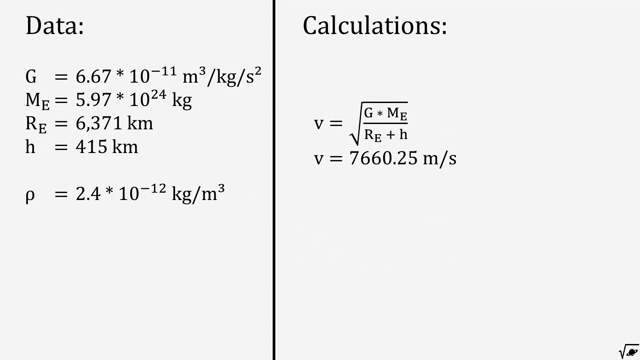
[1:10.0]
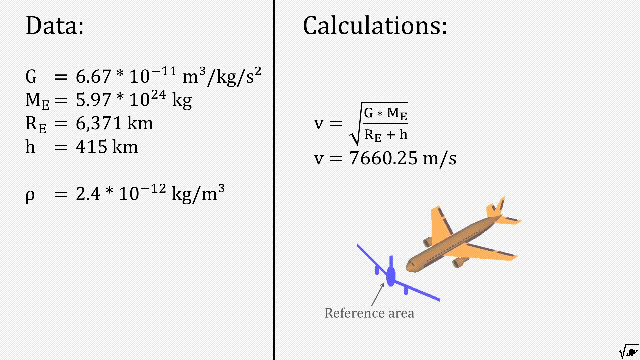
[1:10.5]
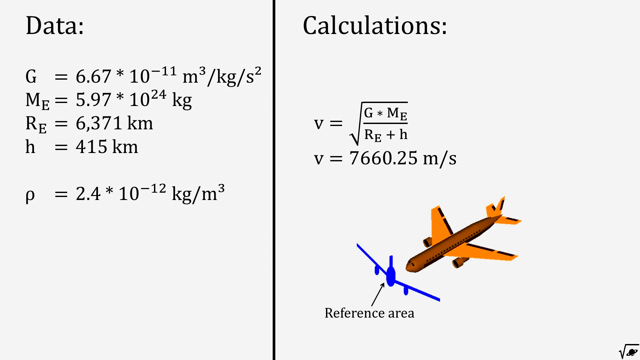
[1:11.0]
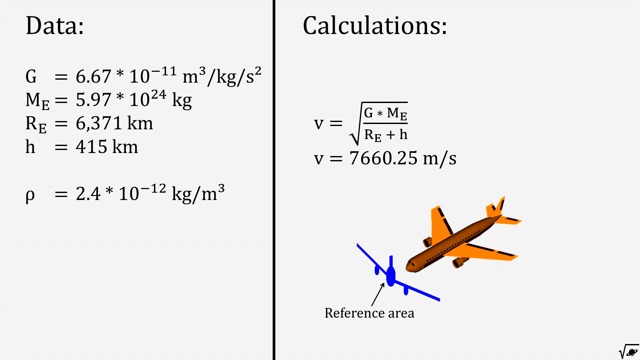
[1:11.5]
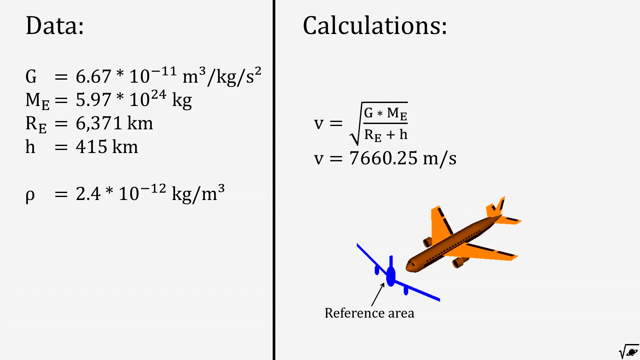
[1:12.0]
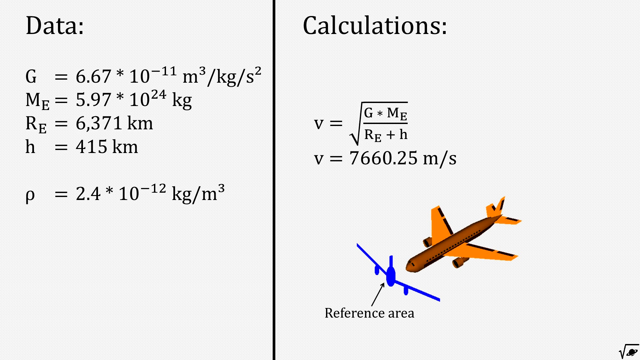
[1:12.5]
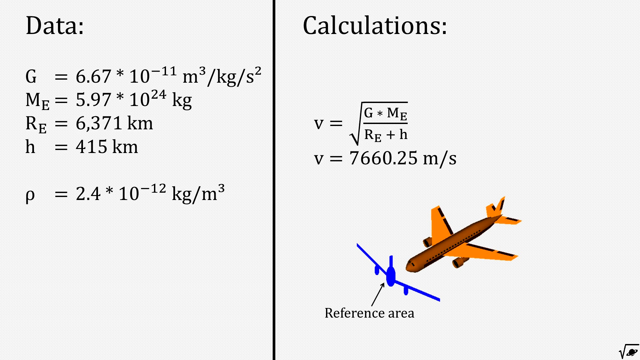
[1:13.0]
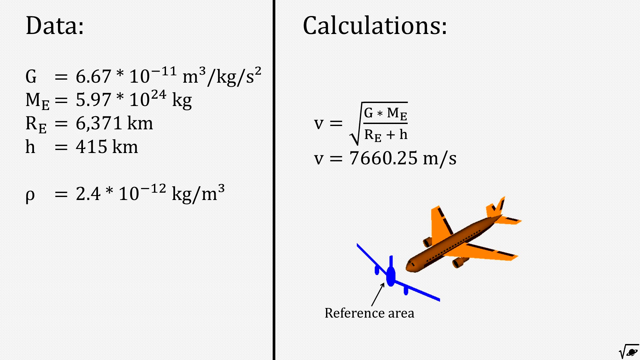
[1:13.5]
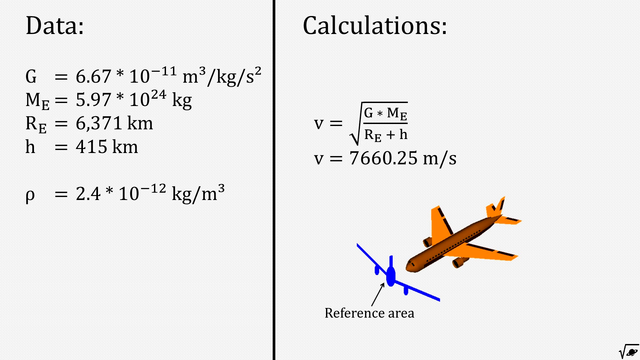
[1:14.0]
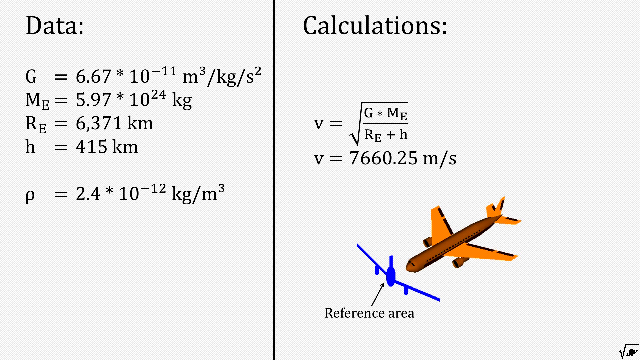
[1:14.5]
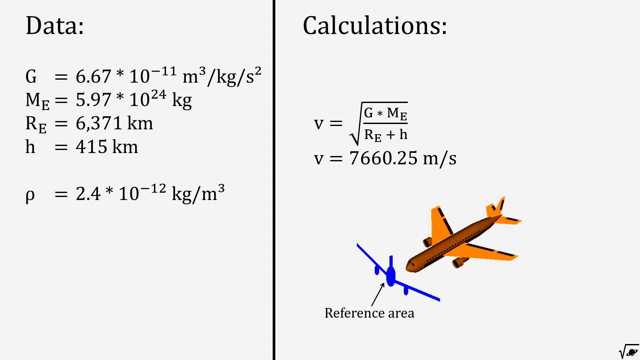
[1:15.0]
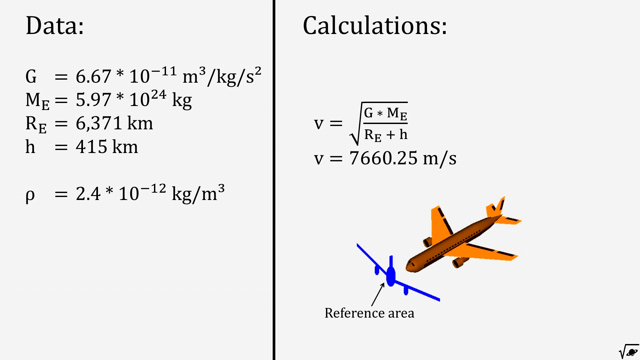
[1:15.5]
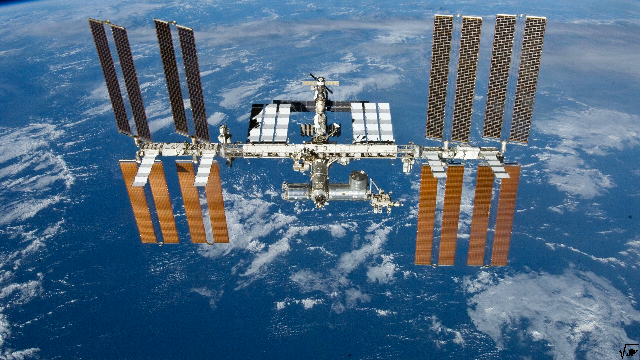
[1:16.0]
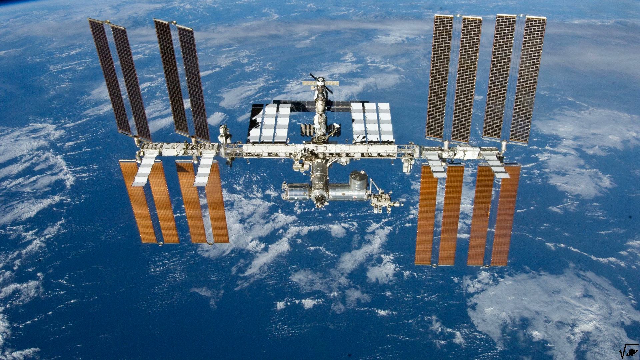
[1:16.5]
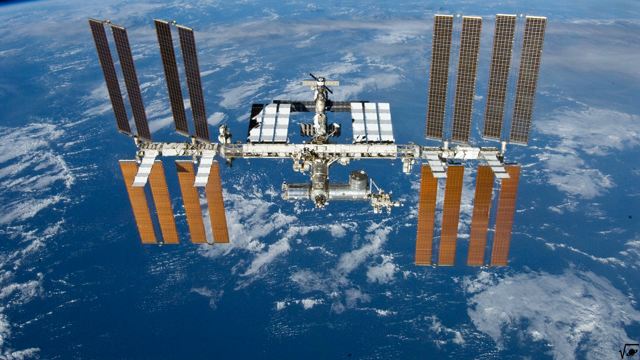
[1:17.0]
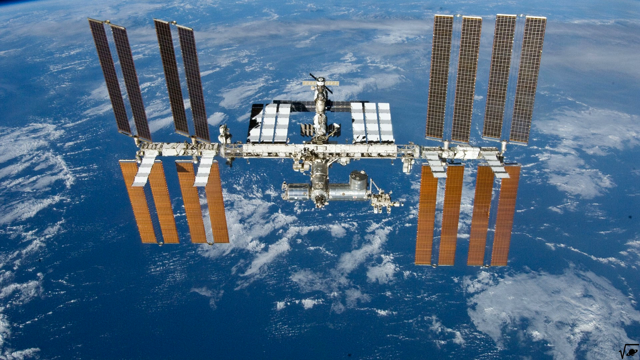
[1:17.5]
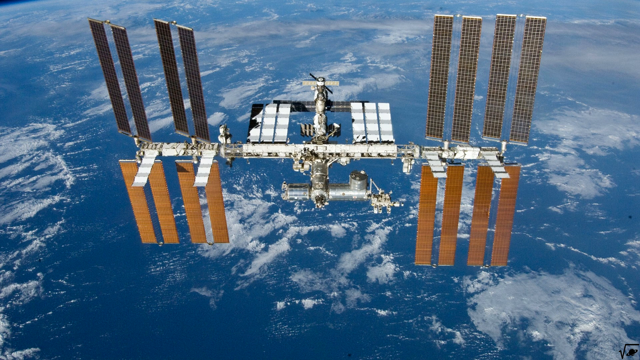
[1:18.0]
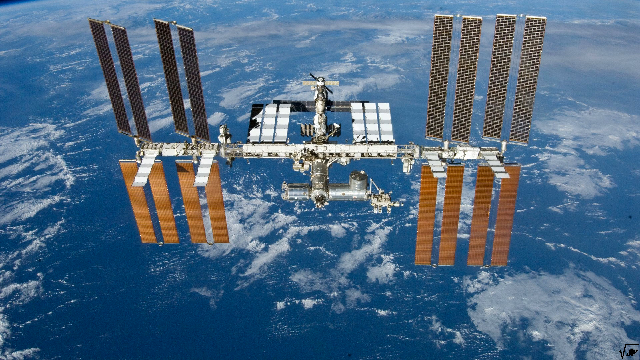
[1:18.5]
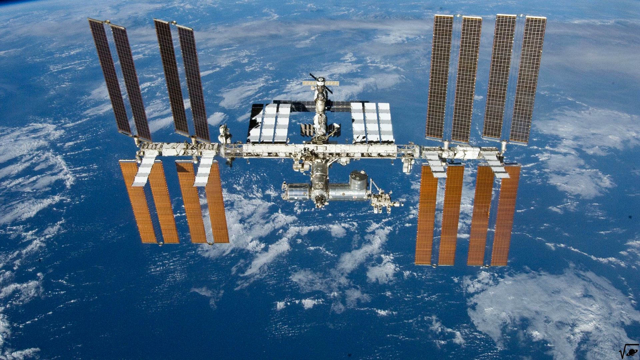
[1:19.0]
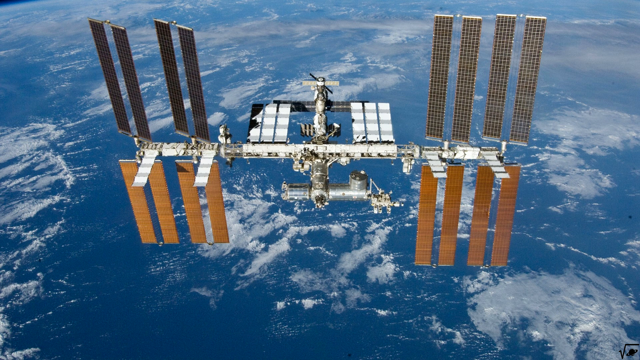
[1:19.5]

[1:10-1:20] The page has the "data" title on the left side and "calculations" on the right side. The data side reads G = 6.67 × 10^-11 m³/kg/s², underneath that Me = 5.97 × 10^24 kg, then Re = 6371 km, h = 415 km, and p = 2.4 × 10^-12 kg/m³. Under calculations, v equals the square root of a fraction with G times Me as the numerator and Re + h as the denominator, and v = 7,760.25 m/s. Then two airplanes are shown, one blue and one like orange, followed by a satellite image.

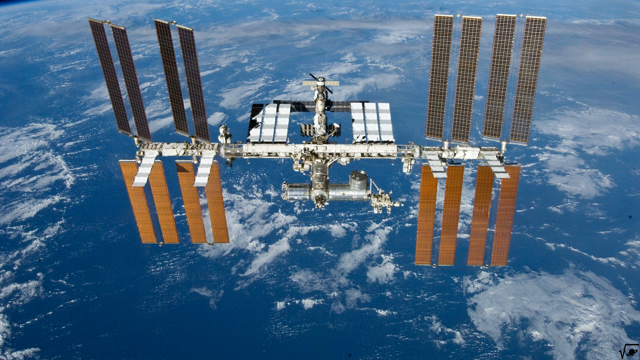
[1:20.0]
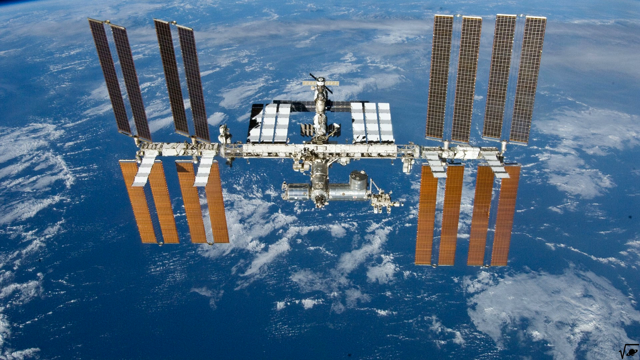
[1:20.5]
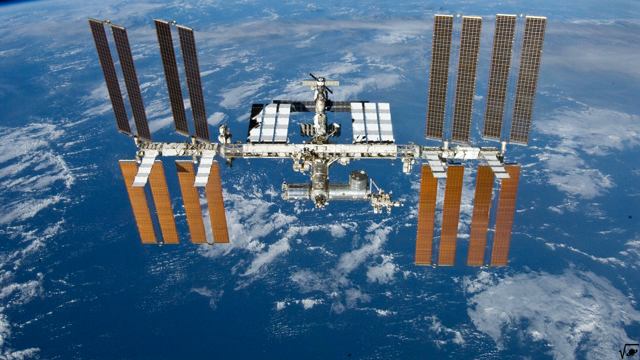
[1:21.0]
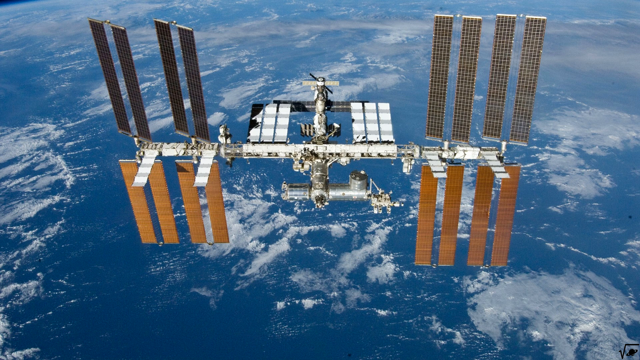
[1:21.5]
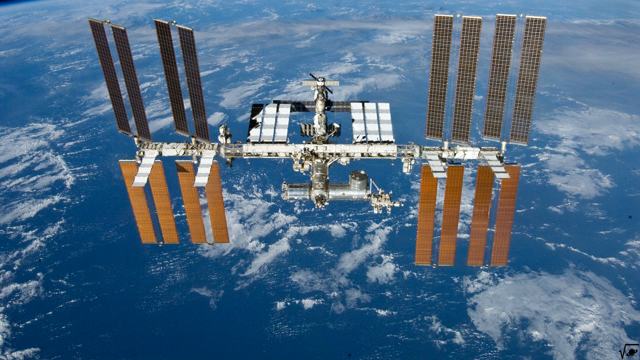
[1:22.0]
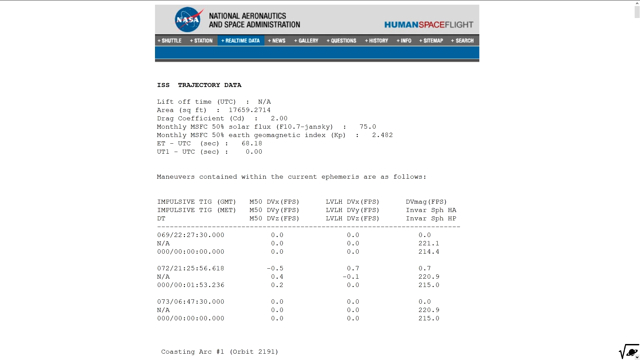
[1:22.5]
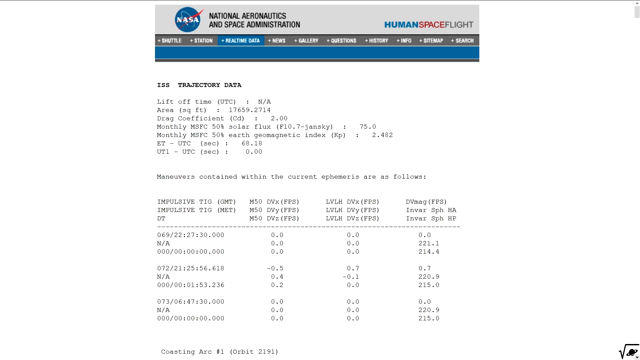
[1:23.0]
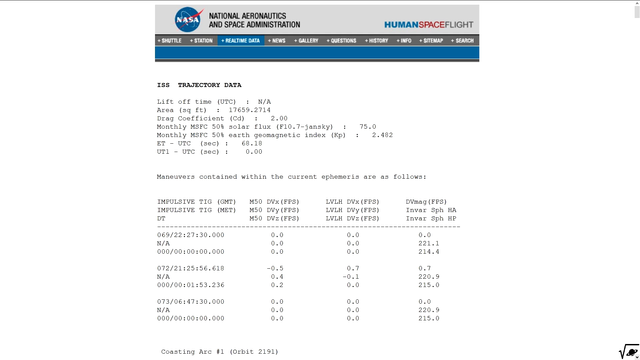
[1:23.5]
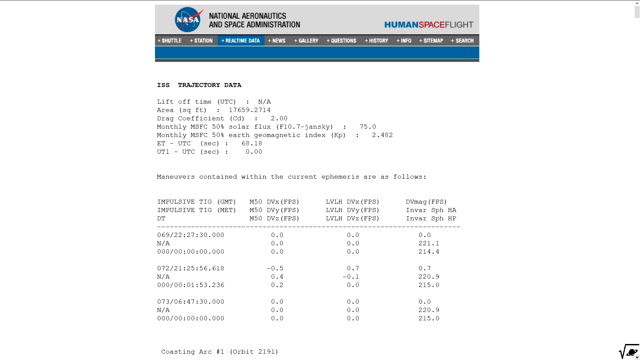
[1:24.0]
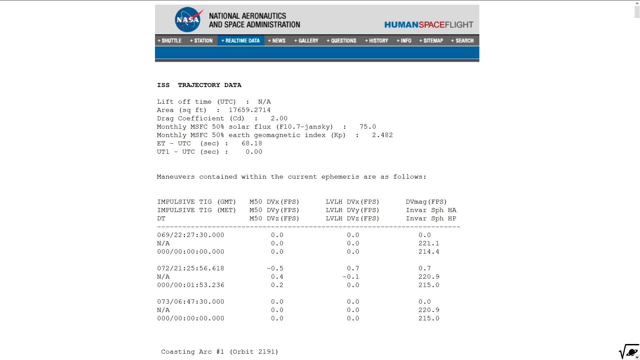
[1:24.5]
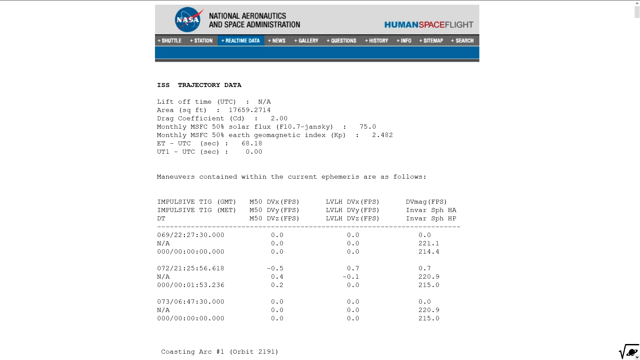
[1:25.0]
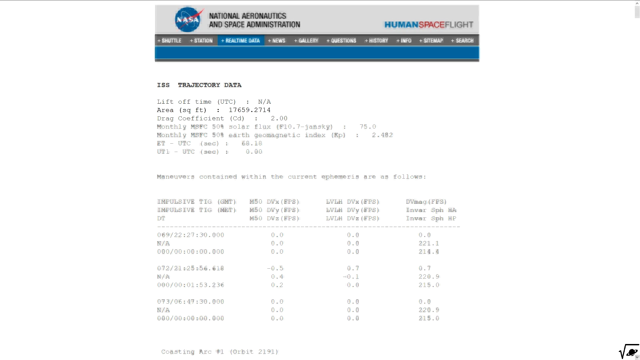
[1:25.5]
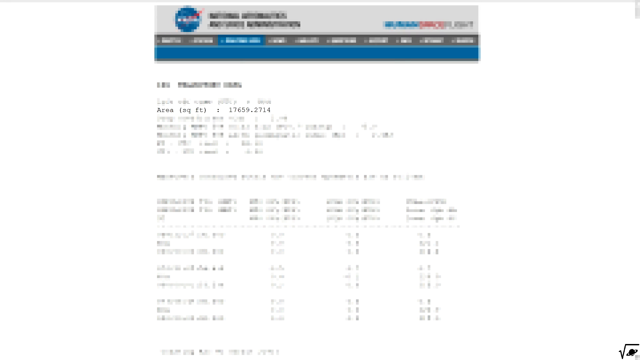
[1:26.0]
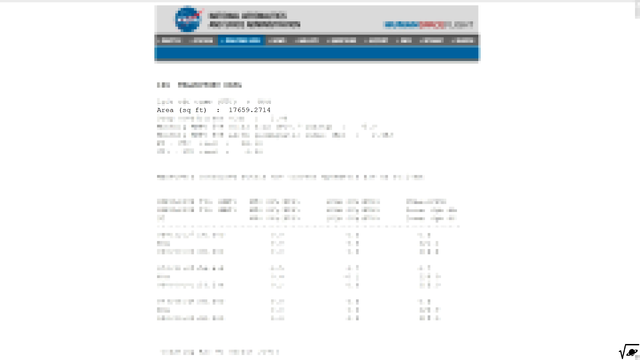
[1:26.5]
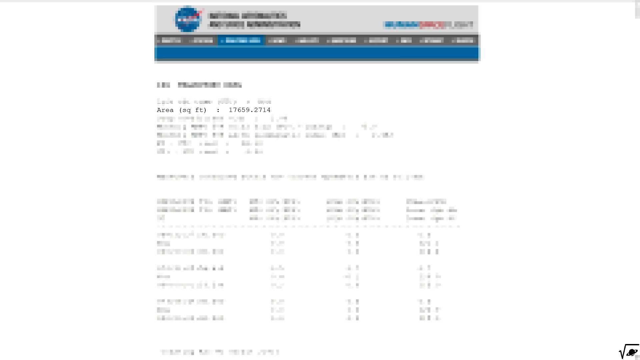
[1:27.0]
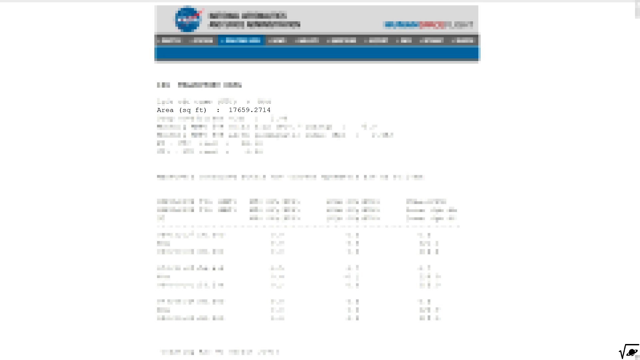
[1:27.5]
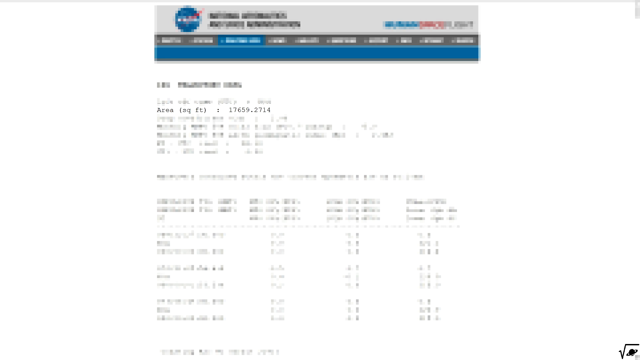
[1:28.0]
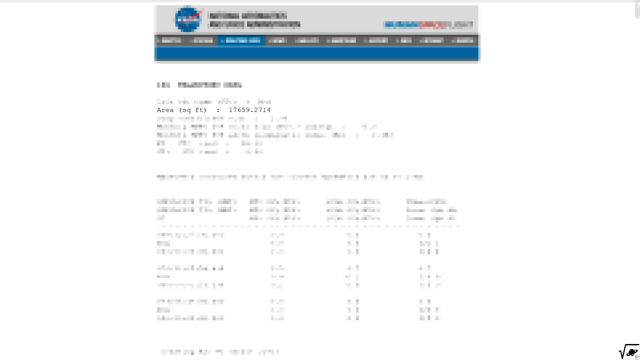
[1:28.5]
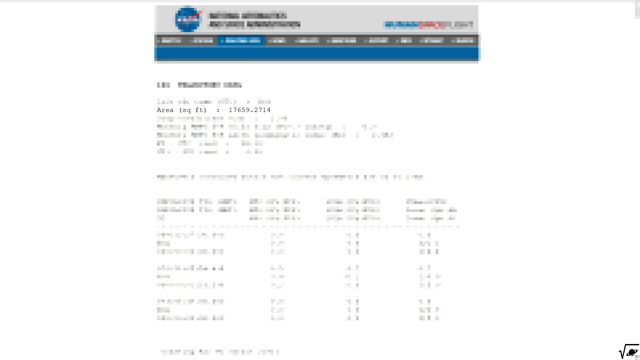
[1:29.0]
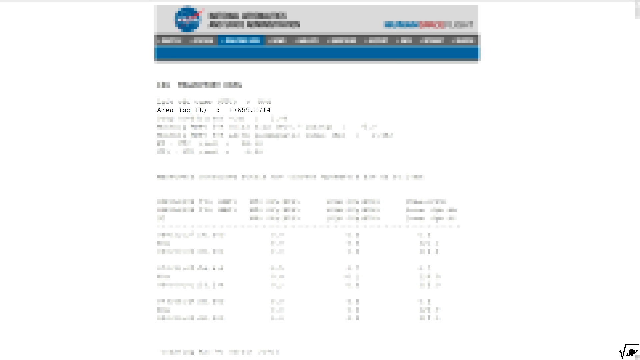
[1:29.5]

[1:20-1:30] The satellite, which looks H-shaped, is shown above the earth, zoomed in so the entire earth is not visible; only blue, white and clouds can be seen. Then a document appears with something like "NASA" at the top and "human space flight" on the right side. It is blurry. The "shuttle station real-time data" tab is highlighted in blue, while the other items are in gray: "news", "gallery", "questions", "info", "history", "site map", "search". The page shows "ISS trajectory data", "liftoff time" and an area.